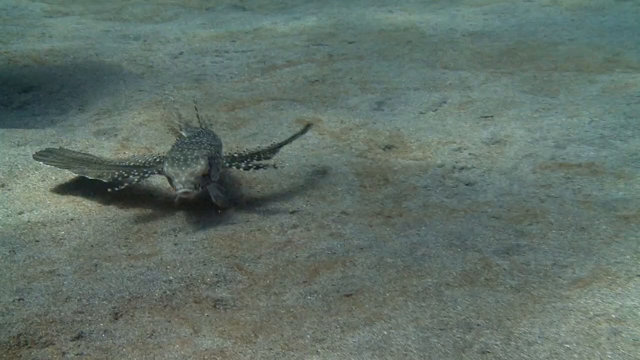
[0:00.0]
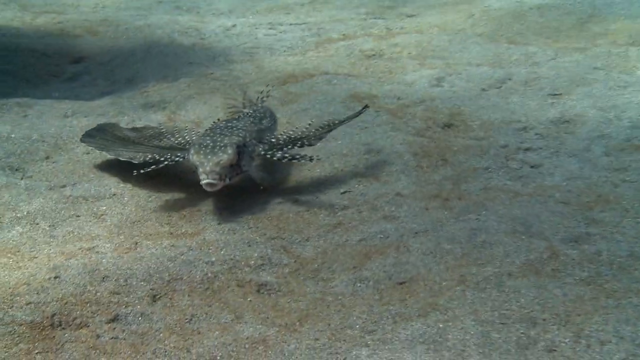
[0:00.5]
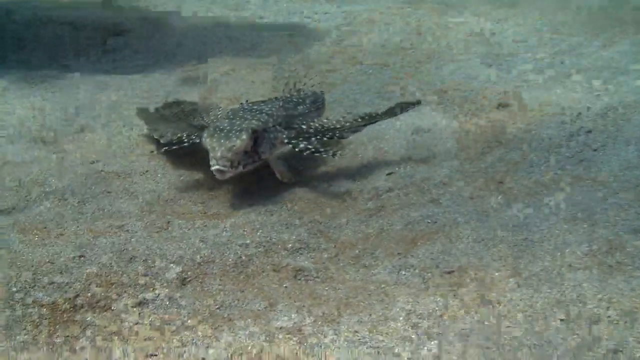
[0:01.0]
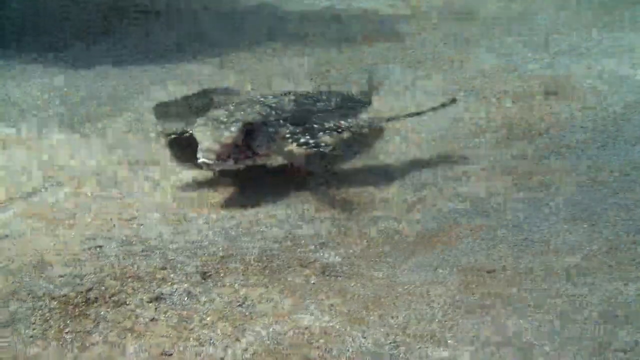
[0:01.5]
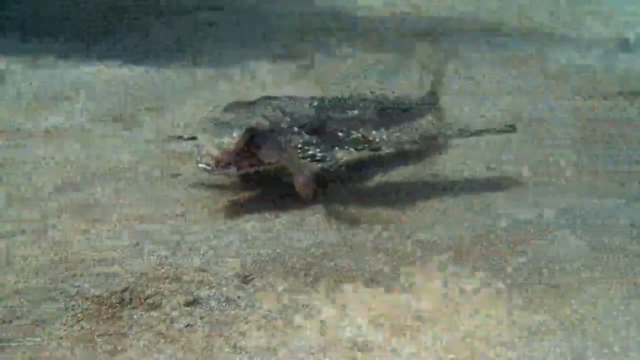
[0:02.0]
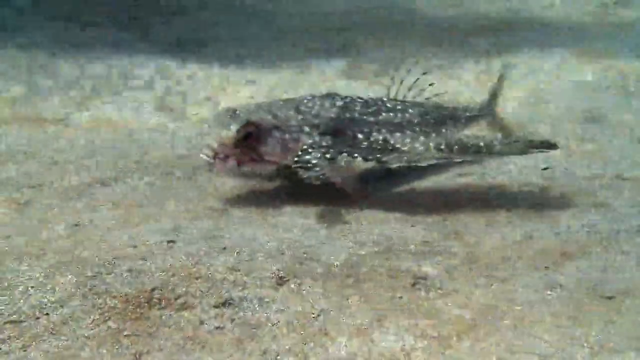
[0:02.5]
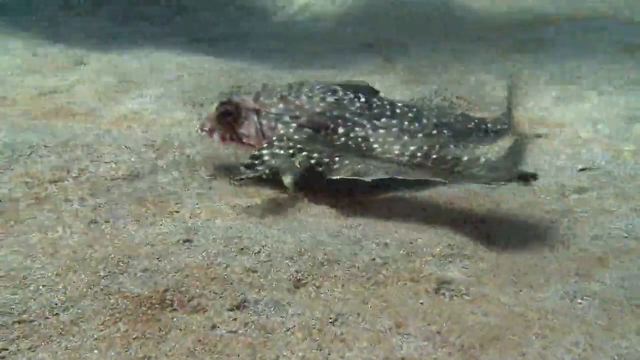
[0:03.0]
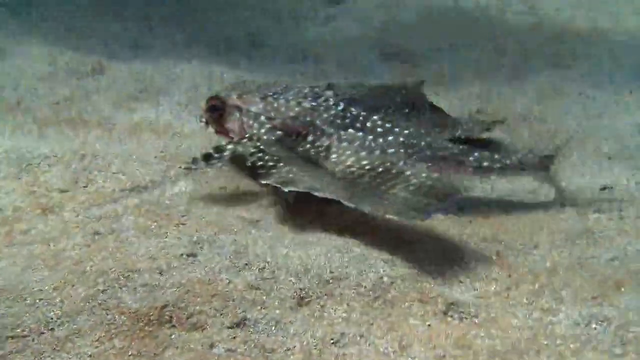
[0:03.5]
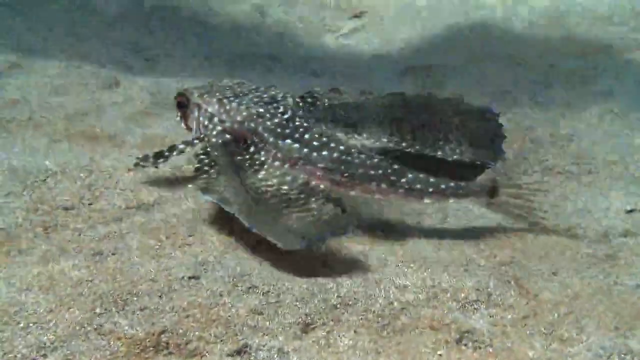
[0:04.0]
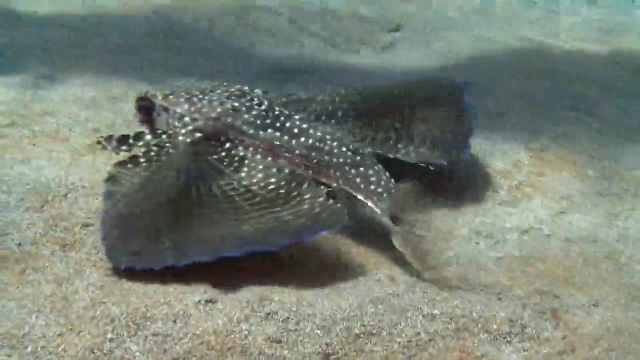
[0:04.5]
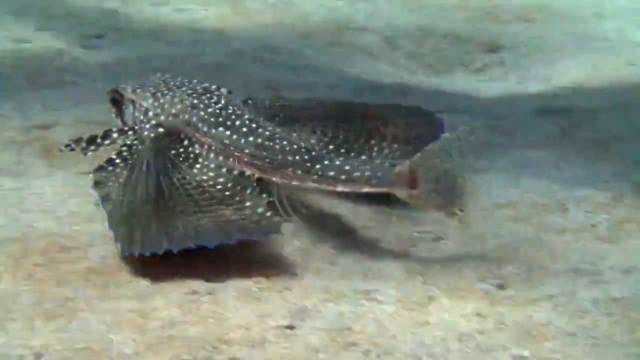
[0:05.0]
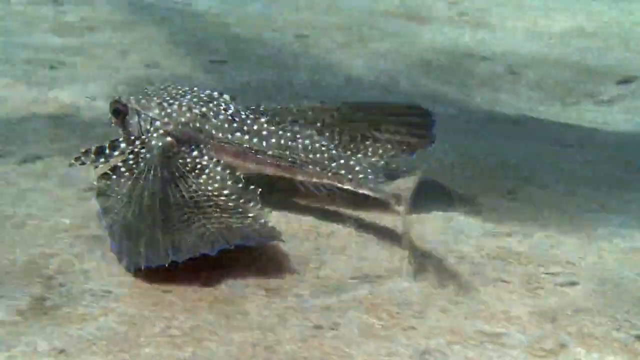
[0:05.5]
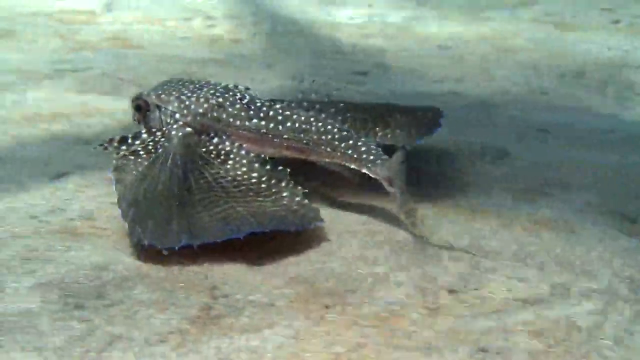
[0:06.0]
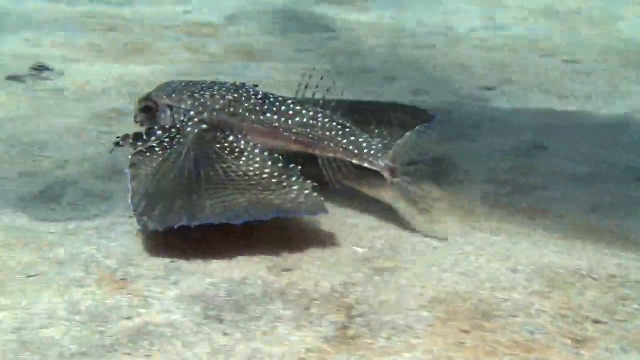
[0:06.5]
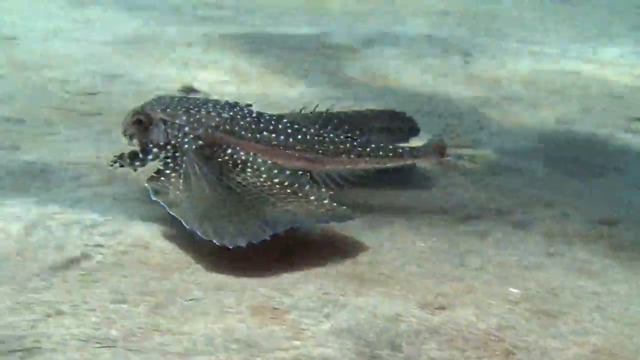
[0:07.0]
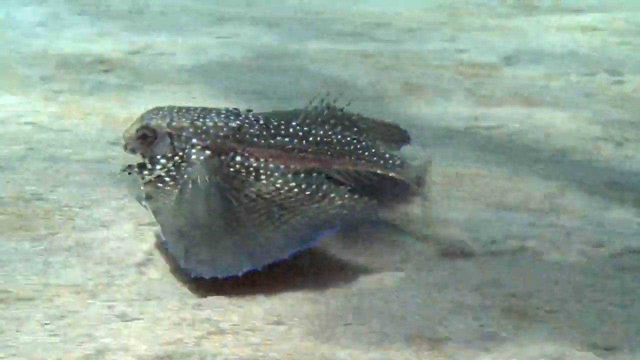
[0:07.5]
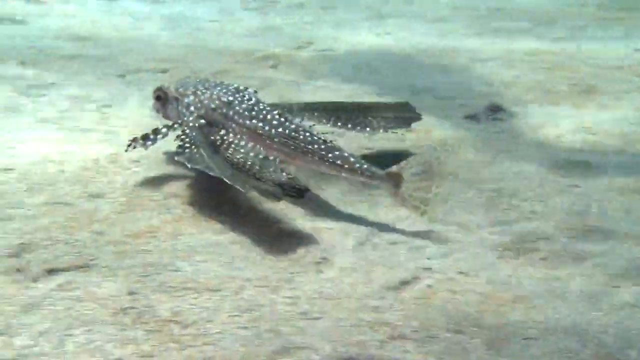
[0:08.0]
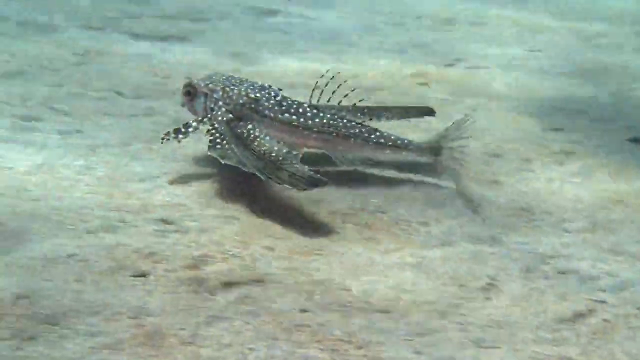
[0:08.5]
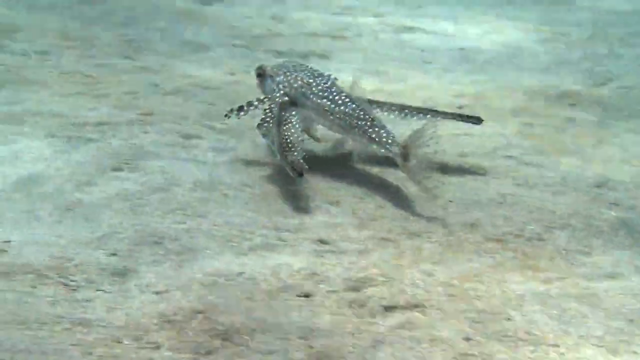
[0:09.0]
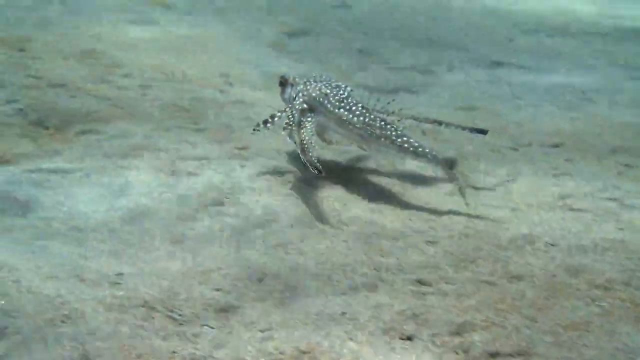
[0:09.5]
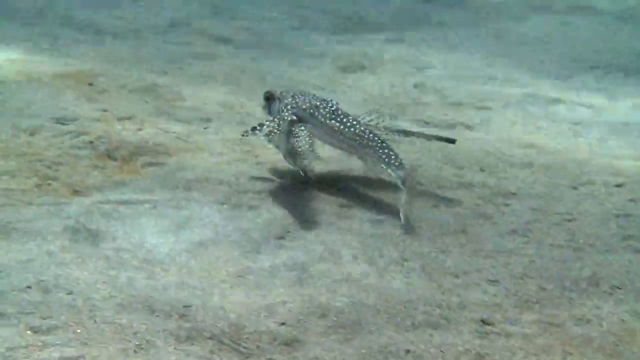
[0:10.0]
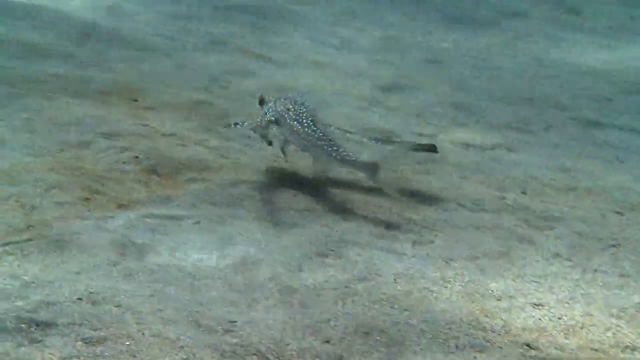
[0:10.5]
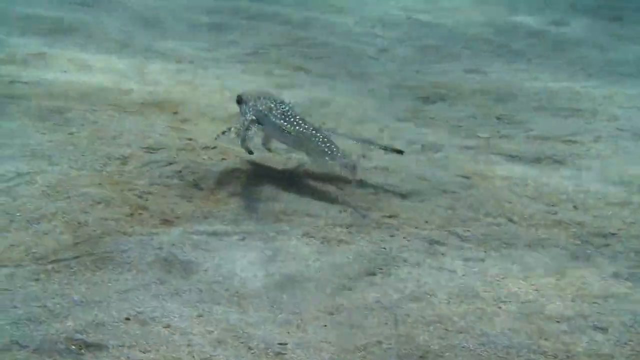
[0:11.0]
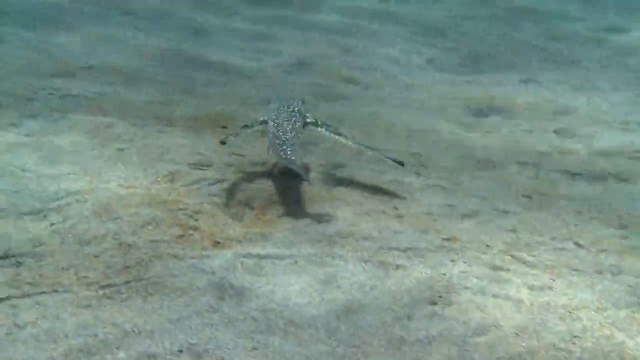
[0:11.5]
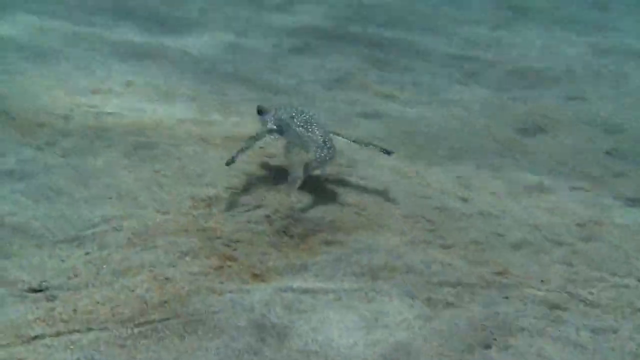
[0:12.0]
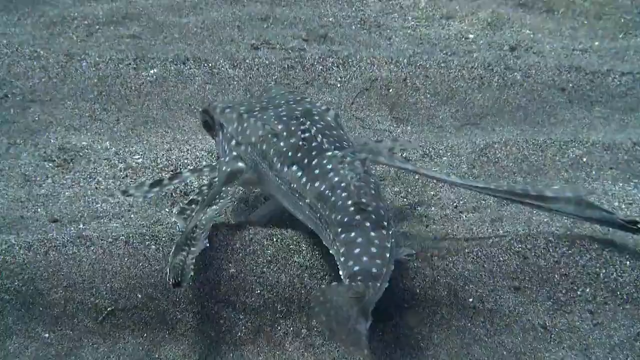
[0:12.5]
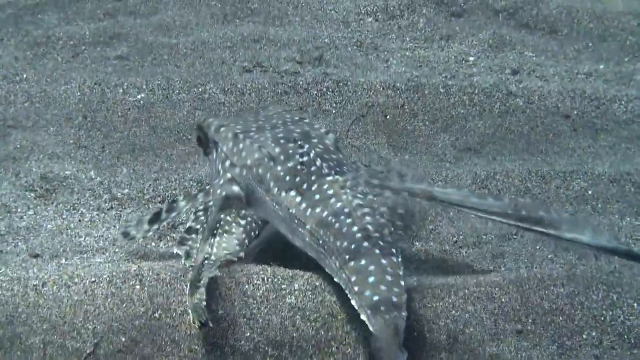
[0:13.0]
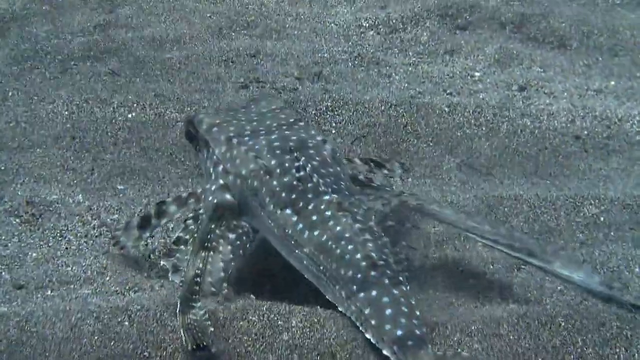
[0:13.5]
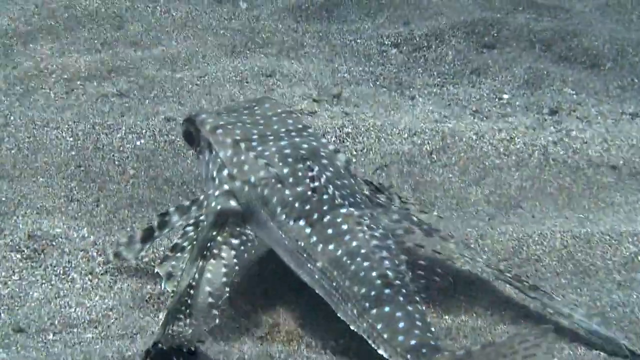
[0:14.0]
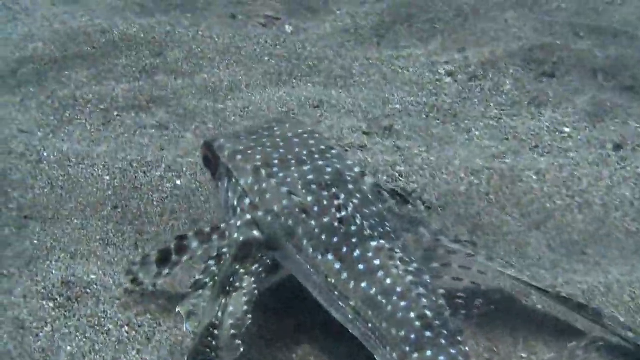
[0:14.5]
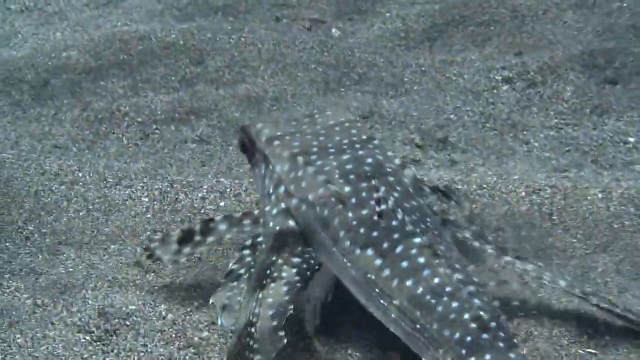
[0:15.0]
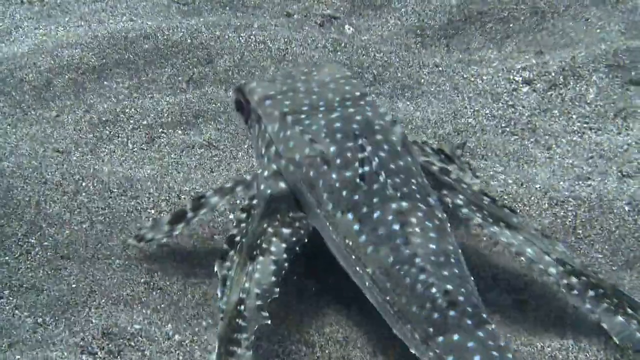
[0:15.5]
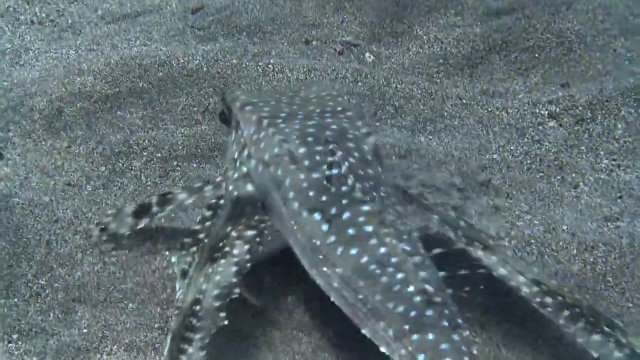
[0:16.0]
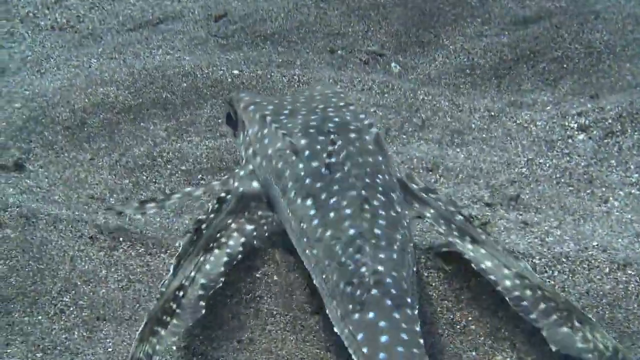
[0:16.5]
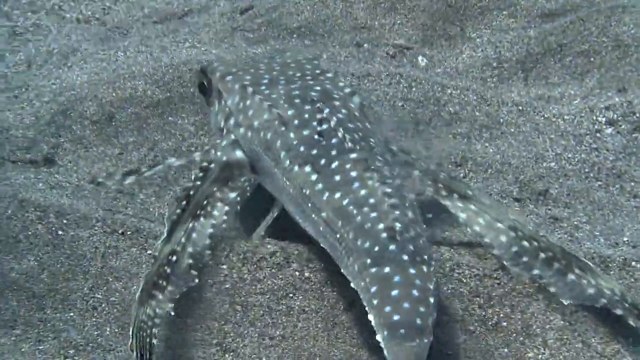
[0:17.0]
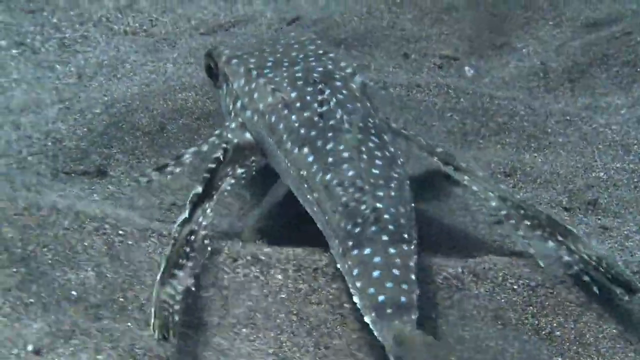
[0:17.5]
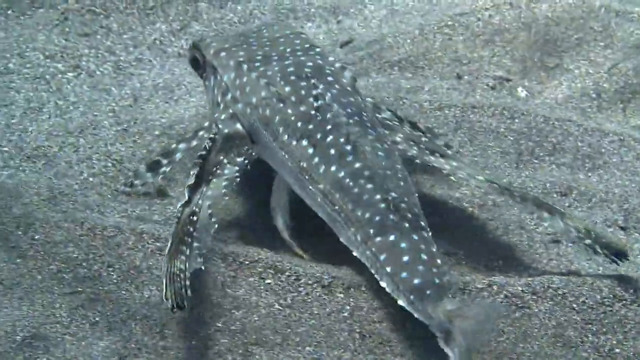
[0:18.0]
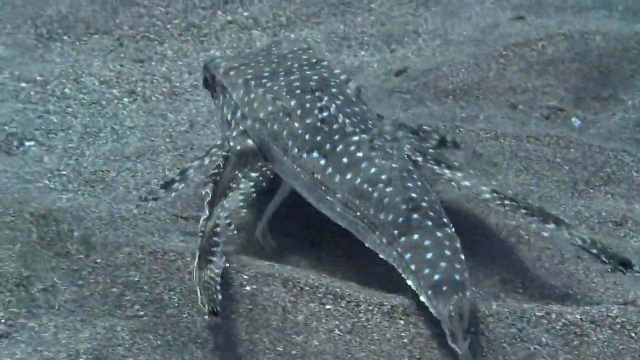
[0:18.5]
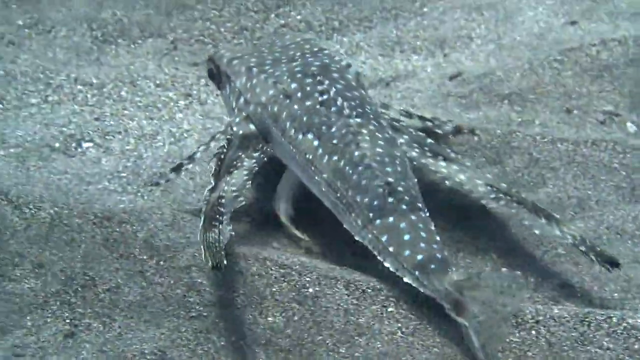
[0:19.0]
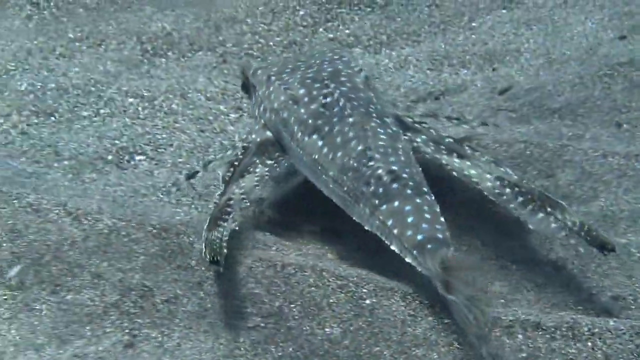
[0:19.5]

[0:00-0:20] An underwater video shows a fish whose species is unclear; it has very wide fins on the right and left sides of its body, but its body looks very dense, and the body itself looks like a puffer fish. It is an odd-looking saltwater fish swimming along the bottom of the ocean. At first it kind of comes toward the diver filming it, then it turns and swims away.